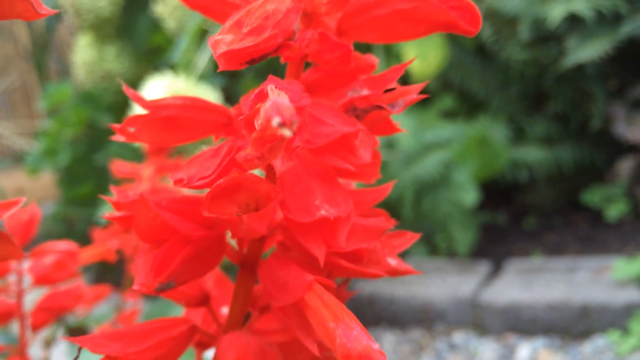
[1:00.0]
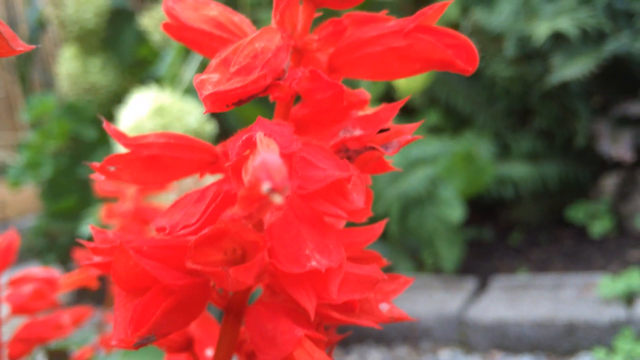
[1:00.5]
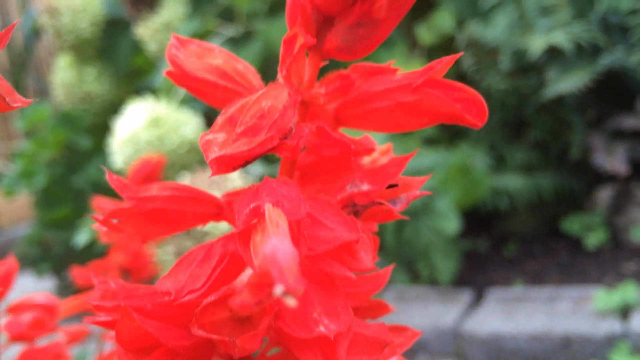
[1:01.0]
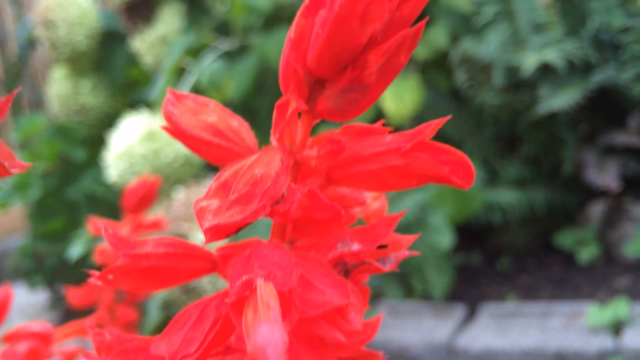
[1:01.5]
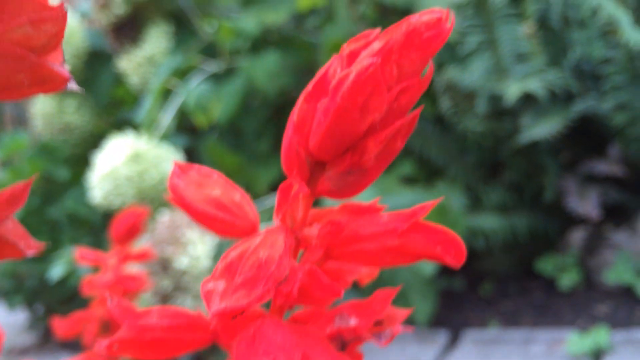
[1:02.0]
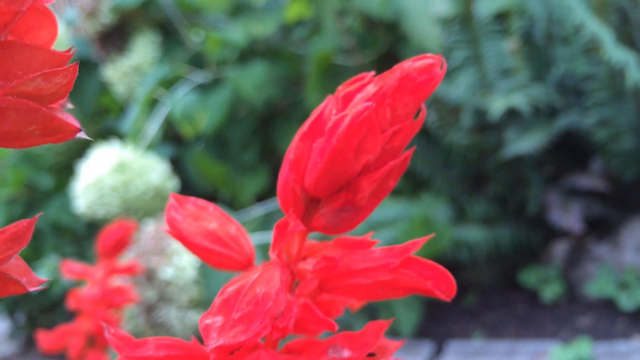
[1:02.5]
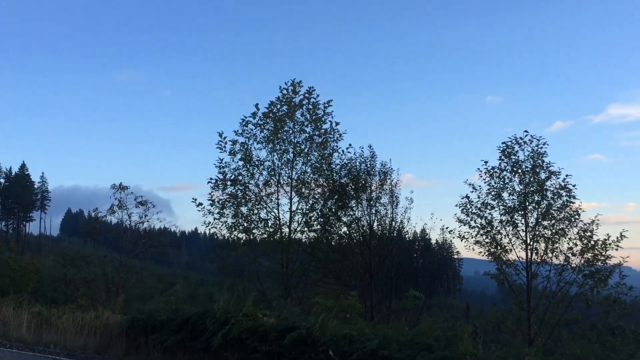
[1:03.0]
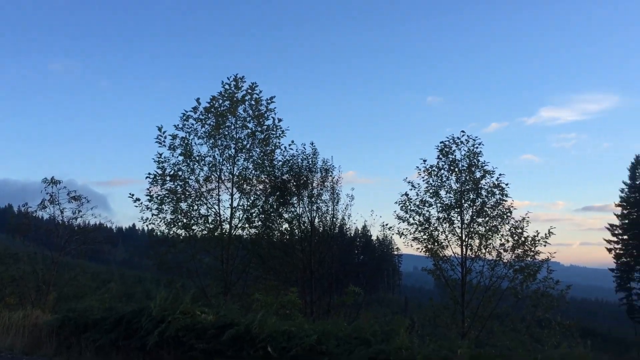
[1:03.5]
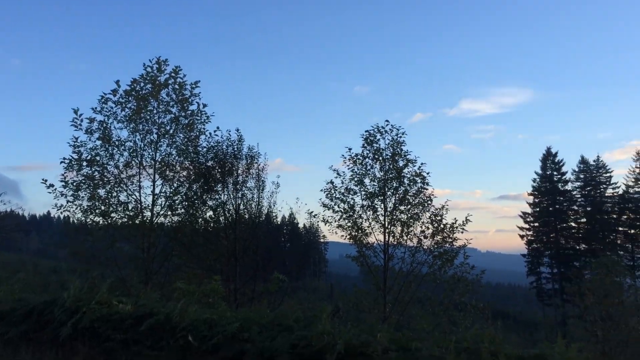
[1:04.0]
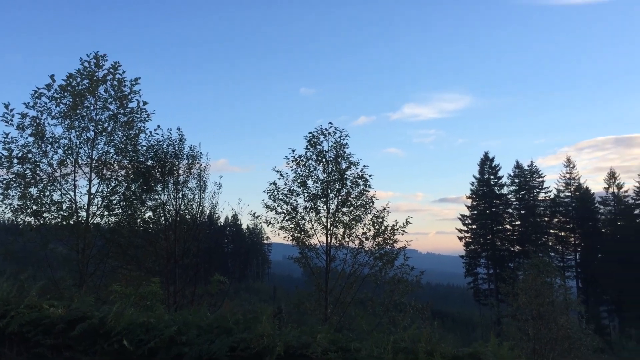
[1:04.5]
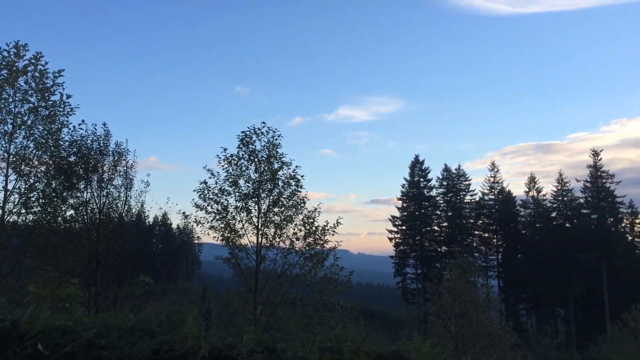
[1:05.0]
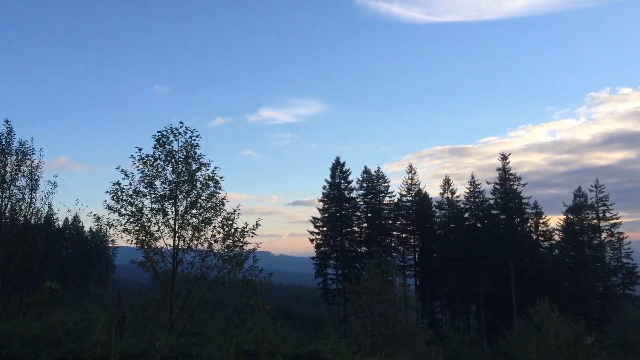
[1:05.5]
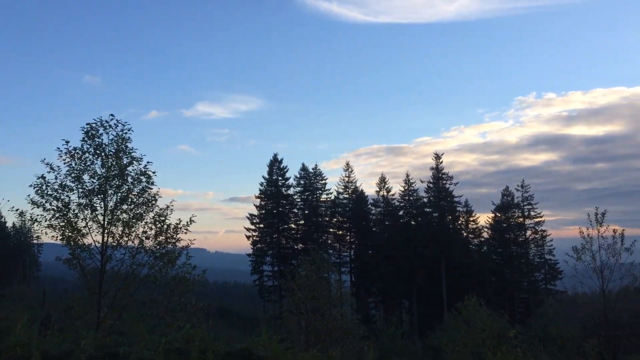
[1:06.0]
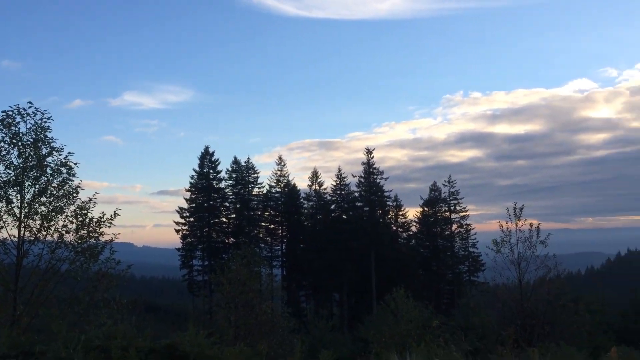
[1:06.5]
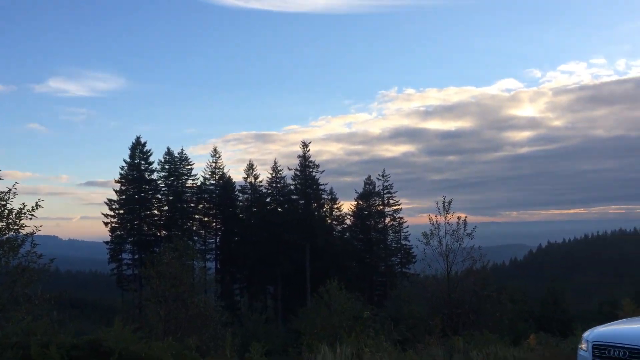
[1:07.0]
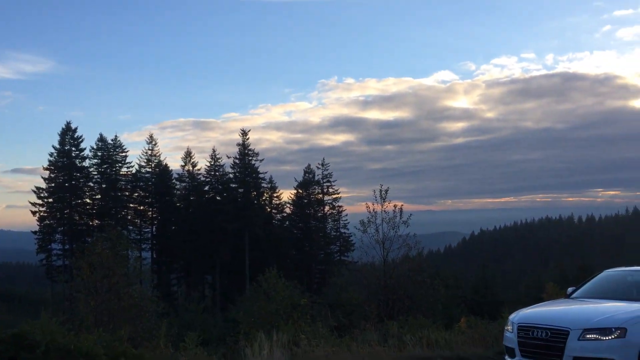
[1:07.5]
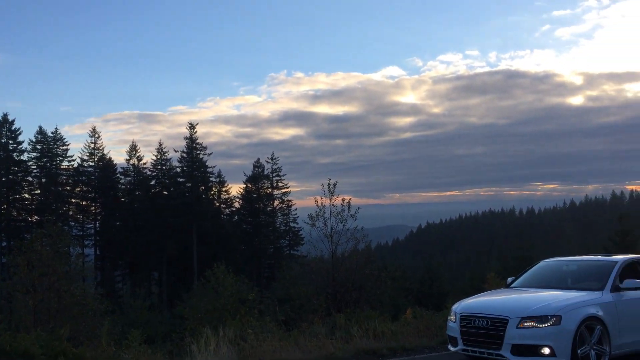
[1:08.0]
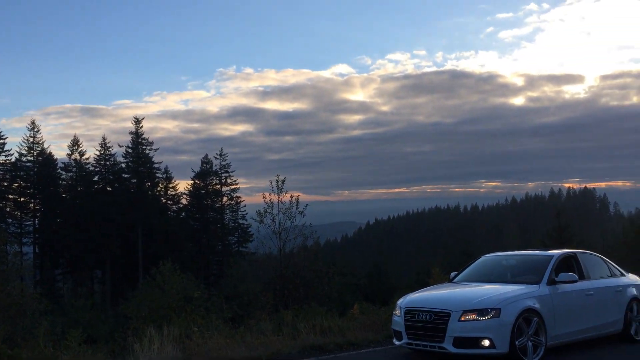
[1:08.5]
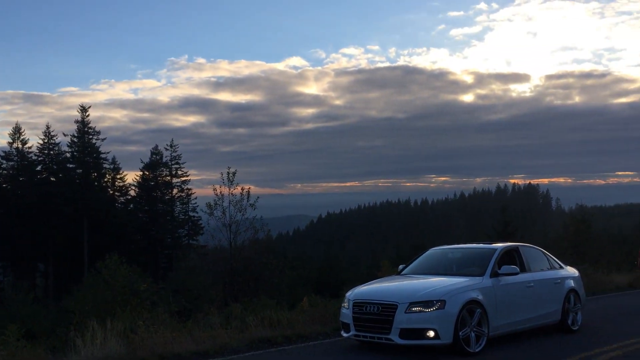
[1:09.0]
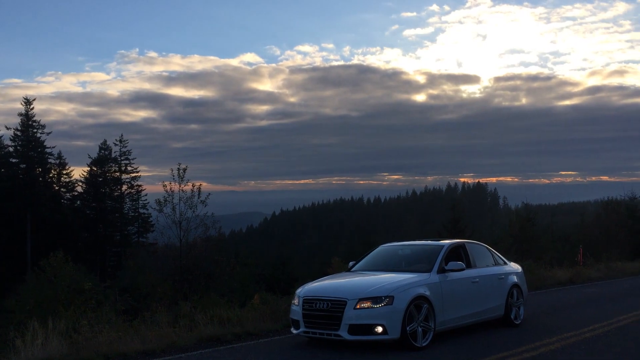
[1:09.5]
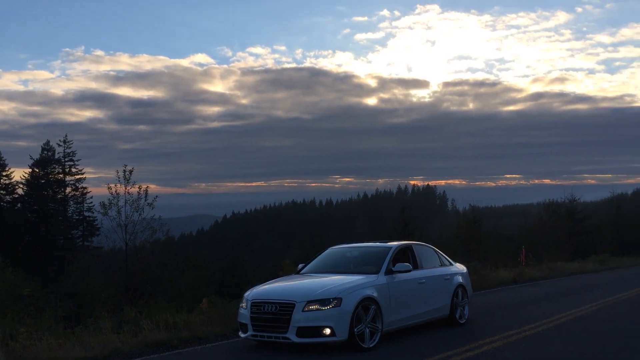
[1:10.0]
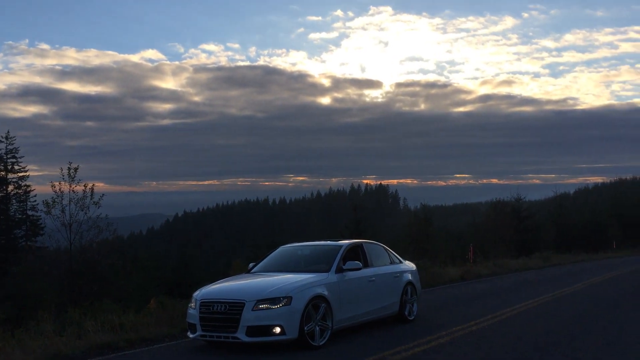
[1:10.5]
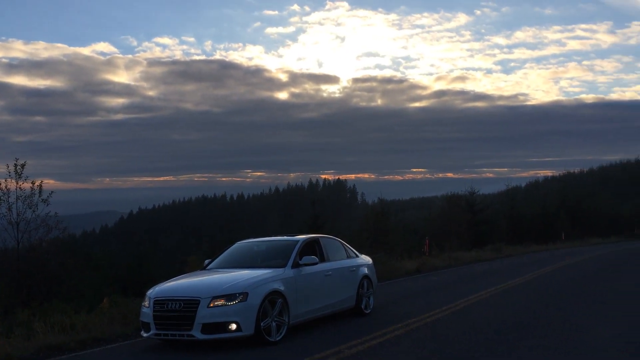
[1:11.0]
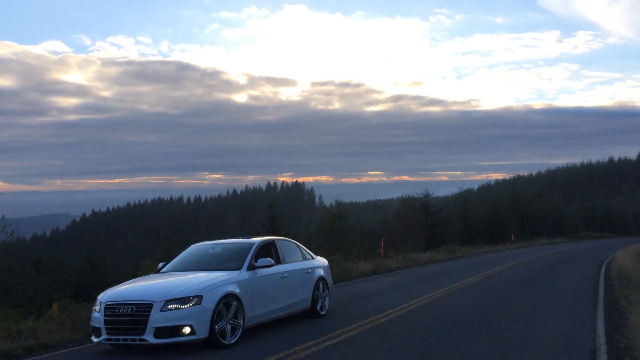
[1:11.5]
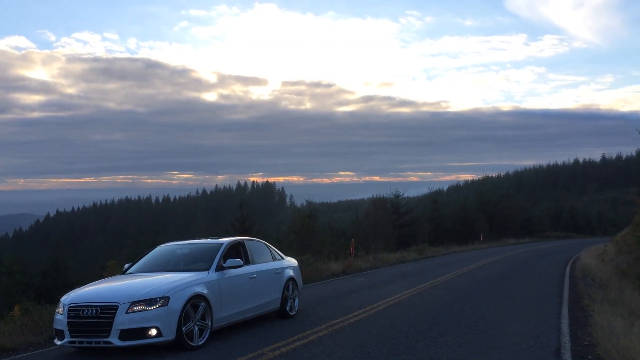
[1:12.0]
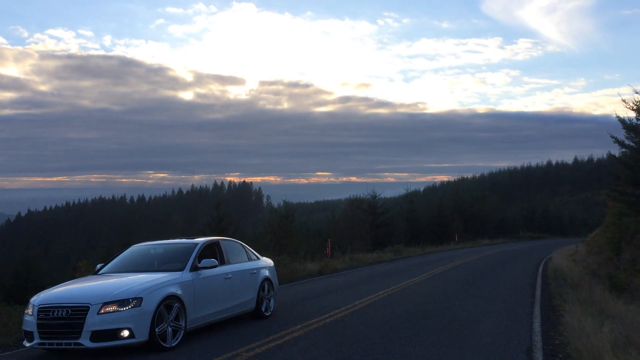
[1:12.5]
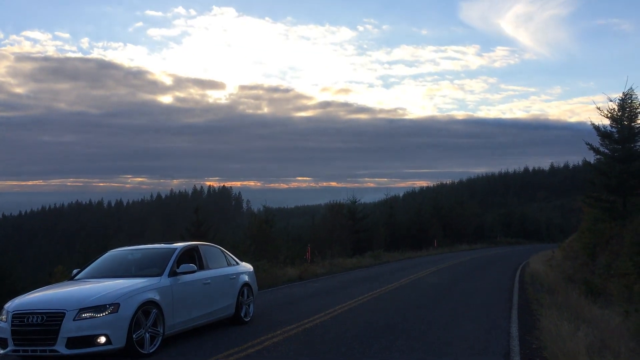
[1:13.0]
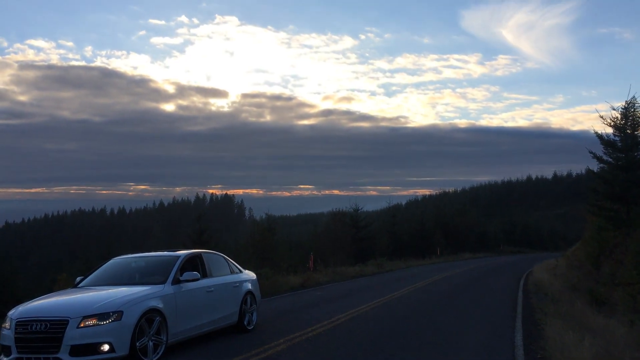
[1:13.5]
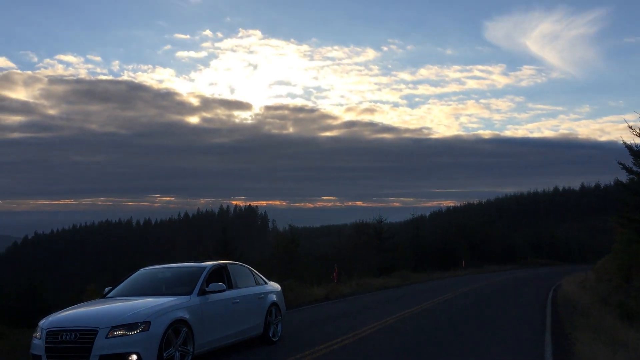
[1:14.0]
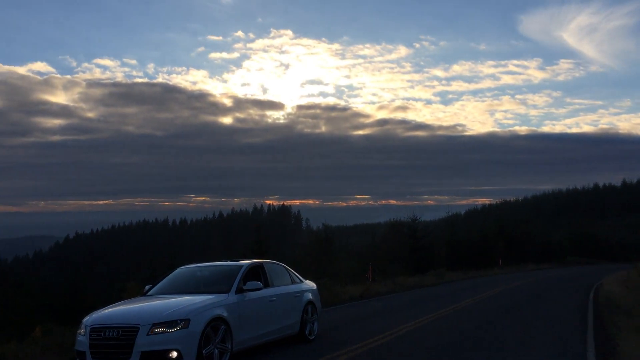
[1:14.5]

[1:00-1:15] The shot of the flower stem continues, then quickly cuts to a landscape panning from left to right across a woodland area. The pan stops on a white Audi that is stopped on the highway and looks fairly new, with sort of a mountain pass highway in the distance. The video cuts to the red flower, then back to the pan: the sky is blue and very cloudy with little patches of blue, it looks like sunset with the sun coming down, and the winding highway is completely empty, curving around to the right. It cuts back to the flower with some bushes behind it, then quickly to a shot of a mountain landscape in the distance with a first ridge and a second ridge a little further back, stretching far into a big sky at the horizon. Clouds at the left are light patches, growing much thicker toward the right and sort of covering the entire frame, while the top half of the frame is left with no clouds toward the end.